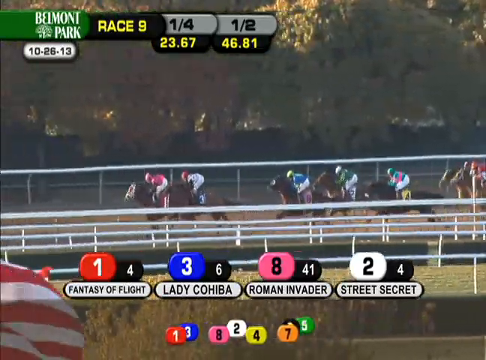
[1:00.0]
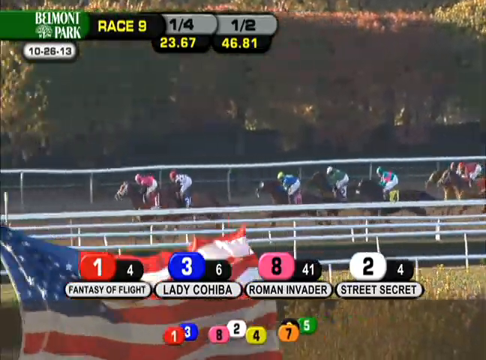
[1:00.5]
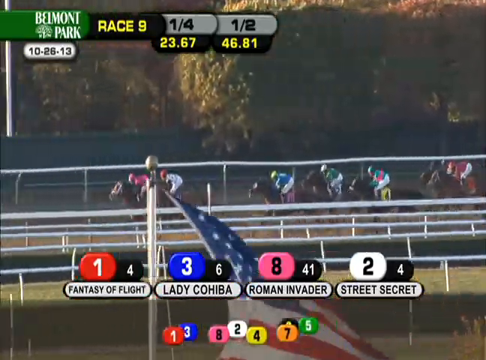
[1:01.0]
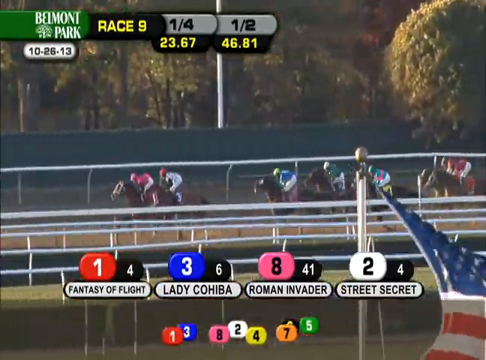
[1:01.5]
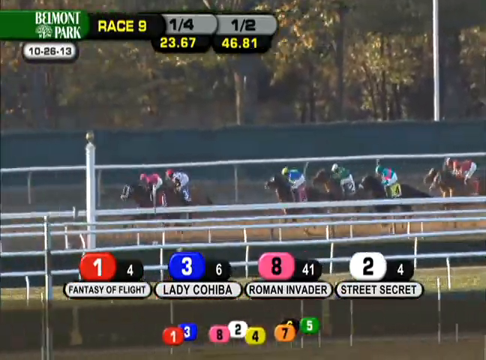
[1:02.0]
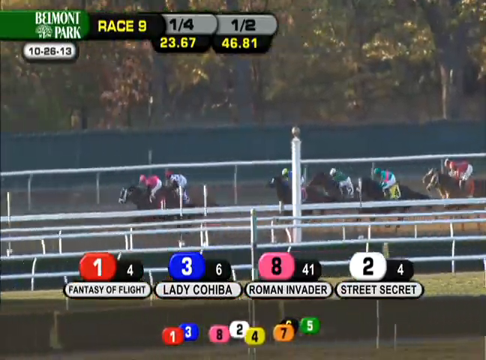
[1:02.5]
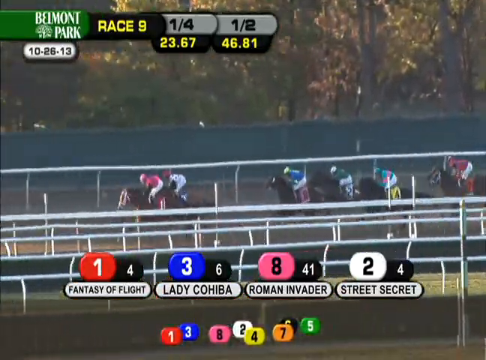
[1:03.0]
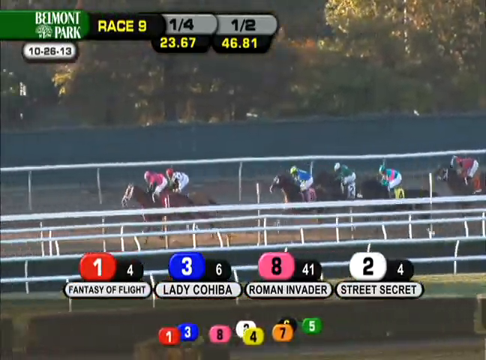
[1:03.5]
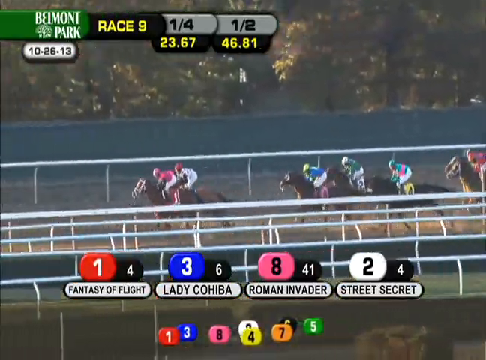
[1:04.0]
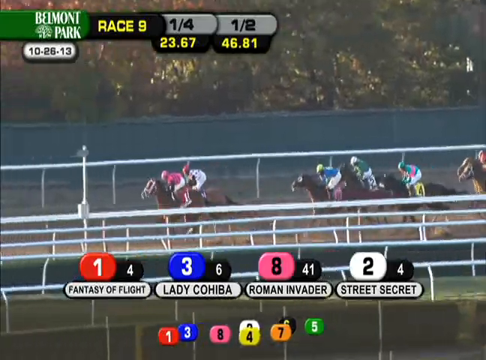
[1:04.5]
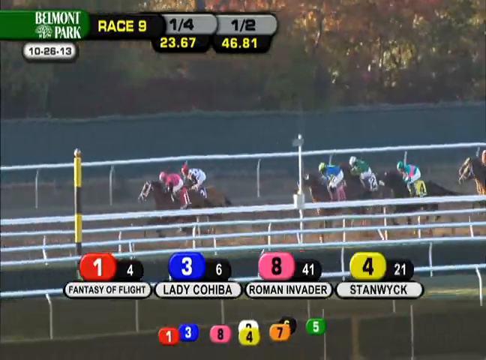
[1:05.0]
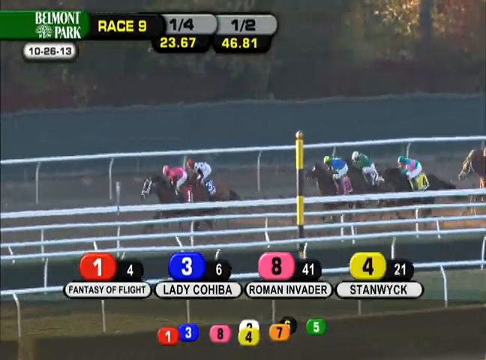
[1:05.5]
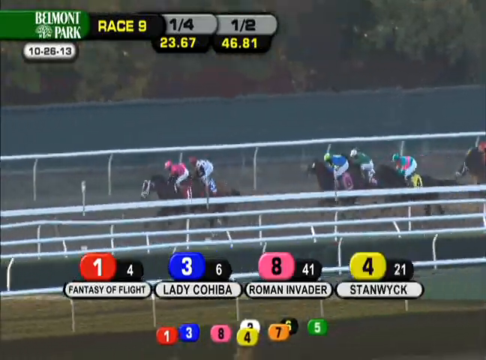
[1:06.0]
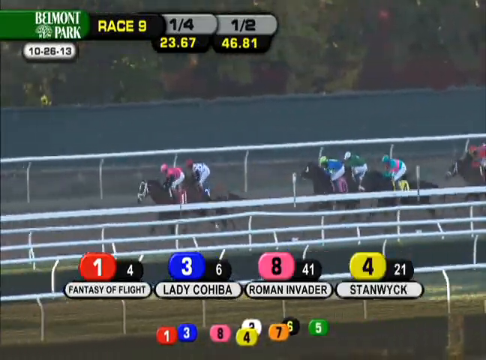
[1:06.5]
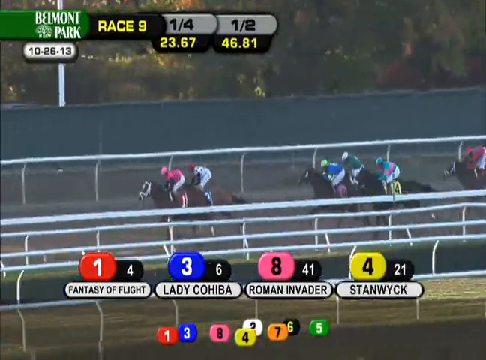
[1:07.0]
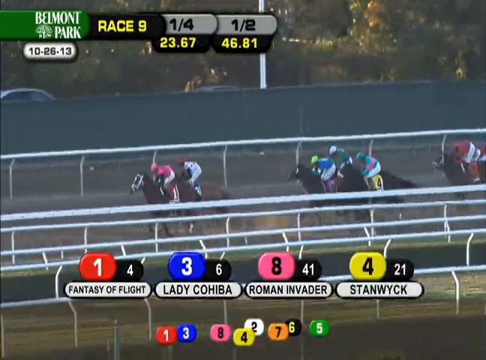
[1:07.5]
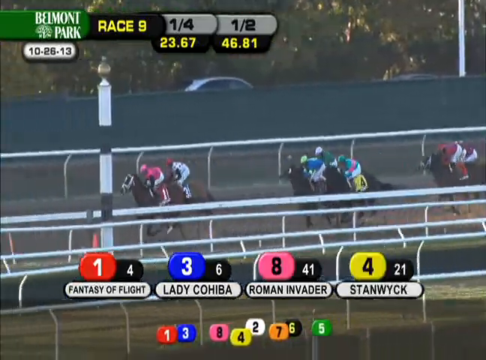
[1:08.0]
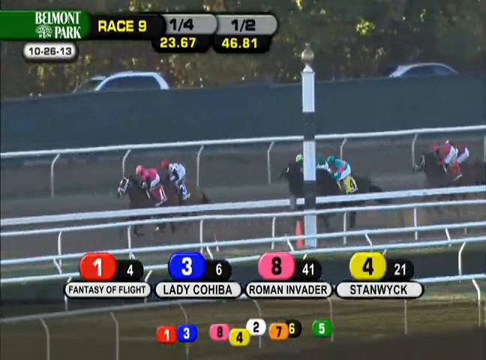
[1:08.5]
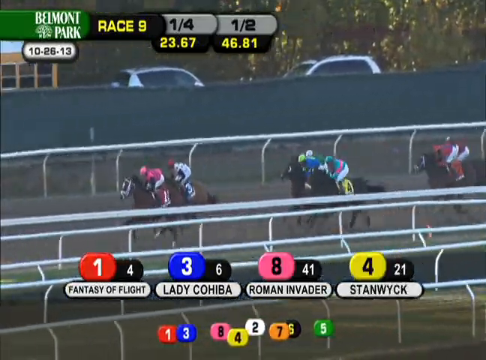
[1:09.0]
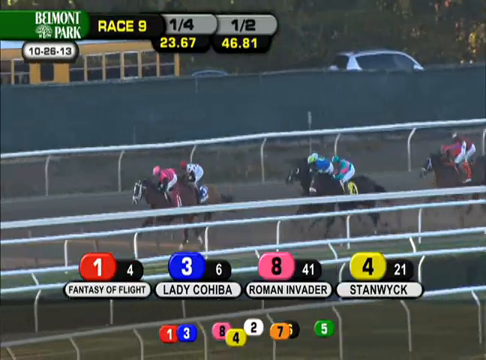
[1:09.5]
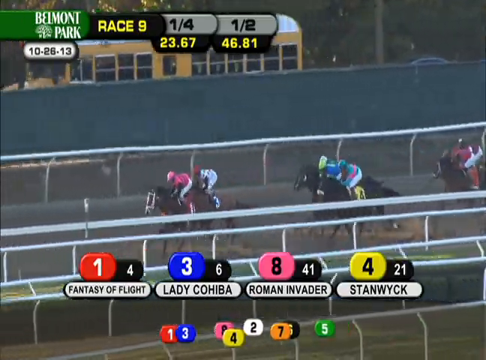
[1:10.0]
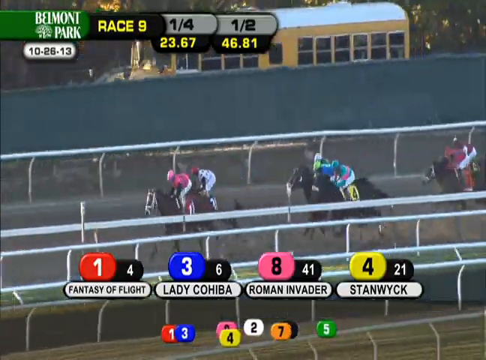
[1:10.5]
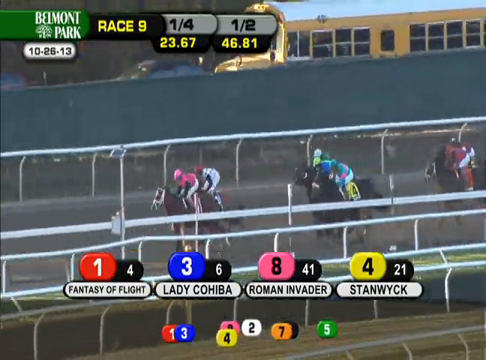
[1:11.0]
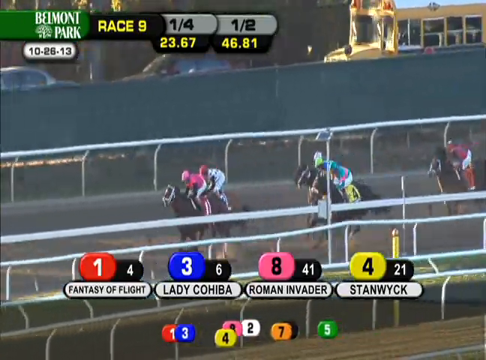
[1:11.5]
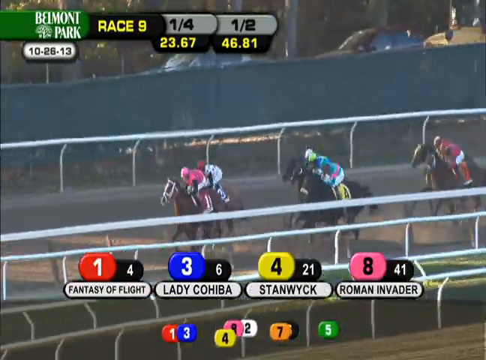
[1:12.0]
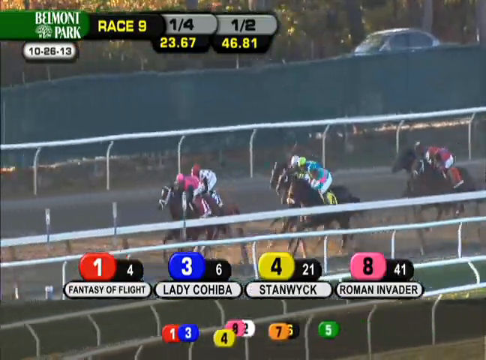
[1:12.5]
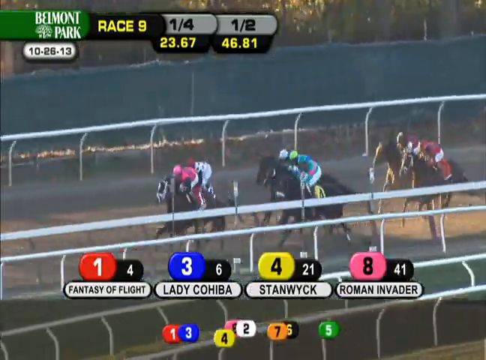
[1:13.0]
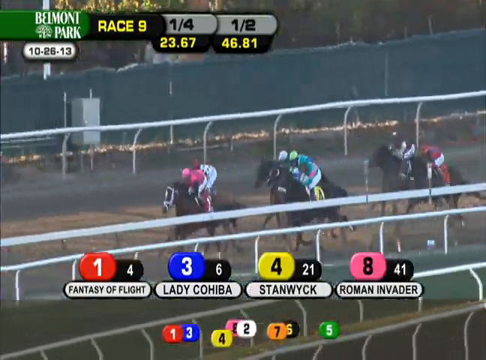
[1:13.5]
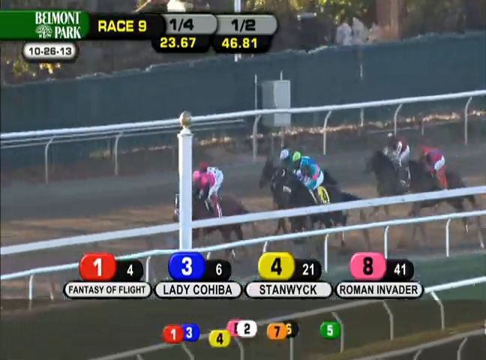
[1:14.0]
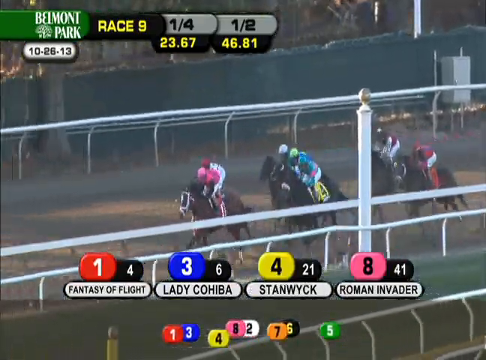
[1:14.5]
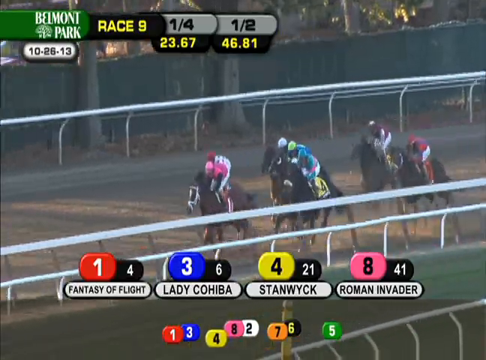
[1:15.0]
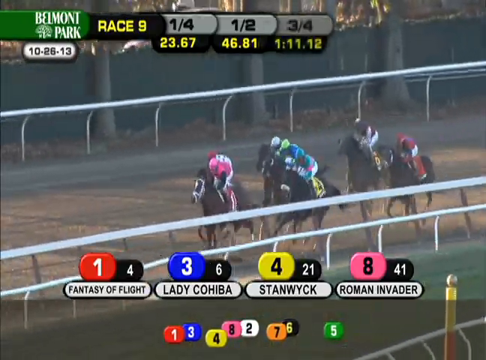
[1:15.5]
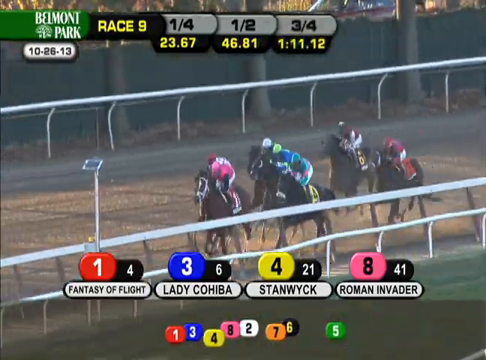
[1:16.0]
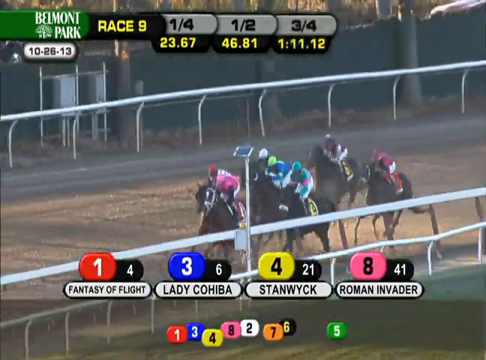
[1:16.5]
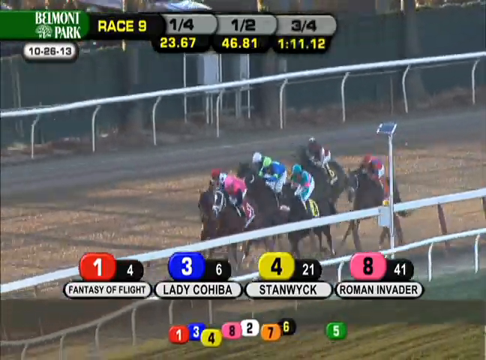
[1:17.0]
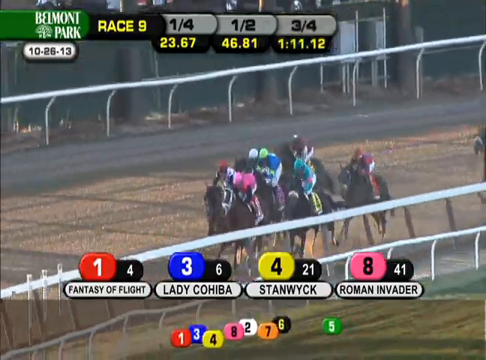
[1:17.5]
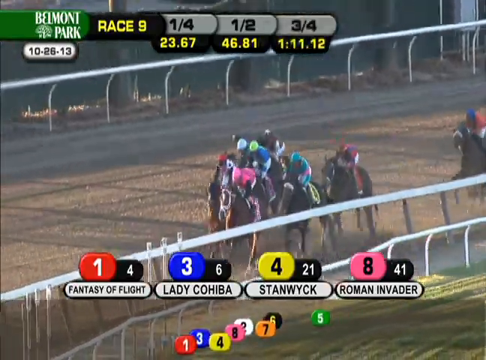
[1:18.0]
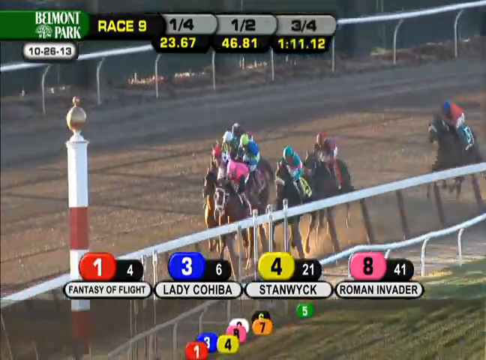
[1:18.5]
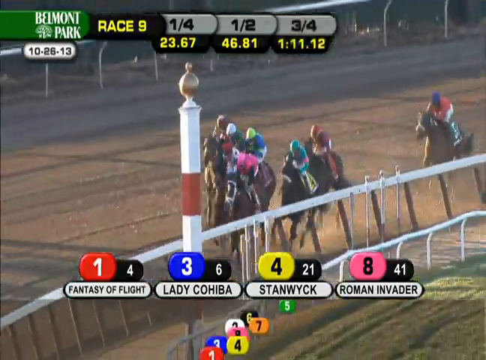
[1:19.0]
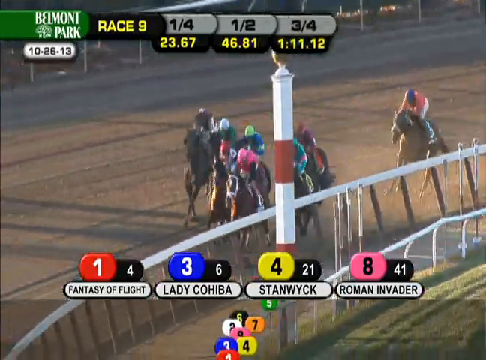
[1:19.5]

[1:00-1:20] A horse race is underway. Eight horses race down the track, each ridden by a jockey in a different colored uniform. At the top left of the screen are several text indicators: a logo for Belmont Park, the venue; a text indicator reading "Race 9"; odds indicators, one saying "1 fourth, 23.67" and another saying "1 half, 46.81"; and the date, October 26, 2013. At the bottom of the screen, indicators show number 1, Fantasy of Flight; number 3, Lady Cahiba; number 8, Roman Invader; and number 2, Street Secret in the top four positions. Beneath these, all eight horses' positions are shown as numbered icons that move back and forth in real time as the distances between the horses change. In the foreground, a United States flag billows in the wind. White guardrails surround the track, and behind it is a field full of trees. The horses race in a straight line with number 1, Fantasy of Flight, ahead of the pack. As they race forward, the background shifts to parked cars and a moving yellow bus. The horses cluster closer together, and Fantasy of Flight begins to lose his lead.